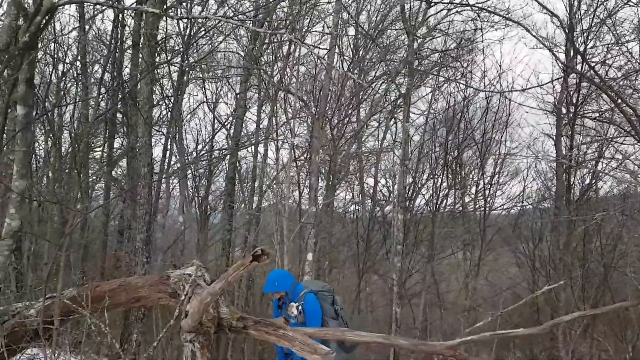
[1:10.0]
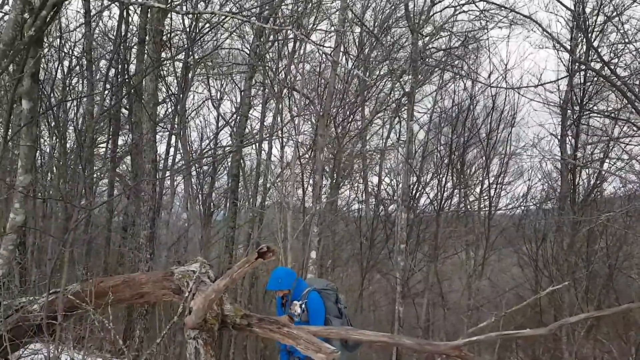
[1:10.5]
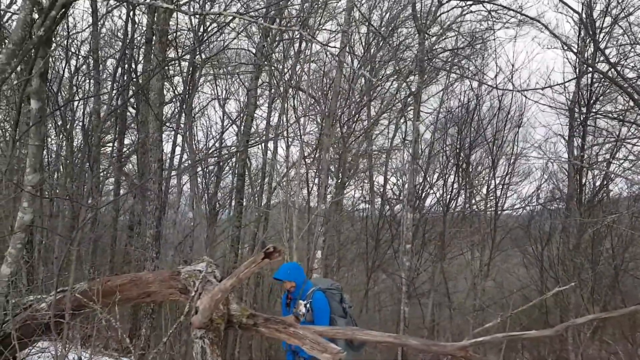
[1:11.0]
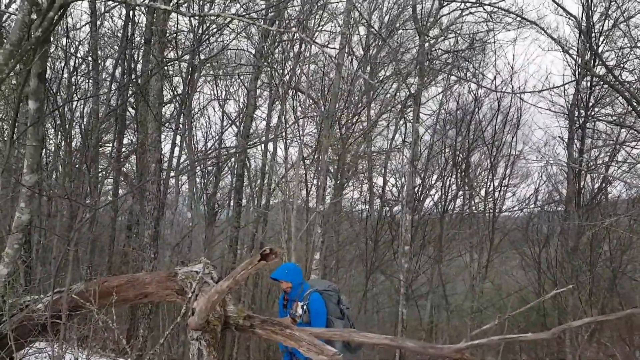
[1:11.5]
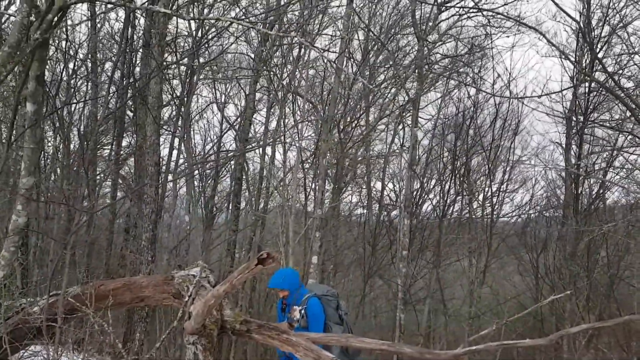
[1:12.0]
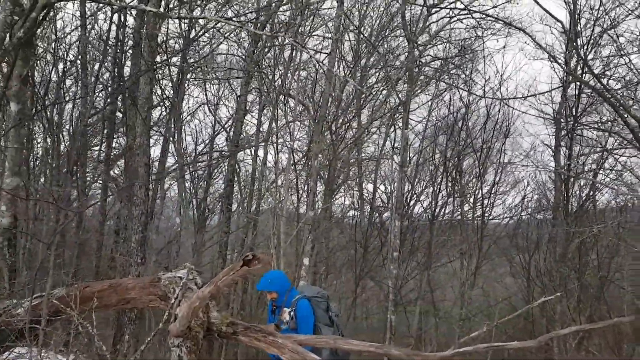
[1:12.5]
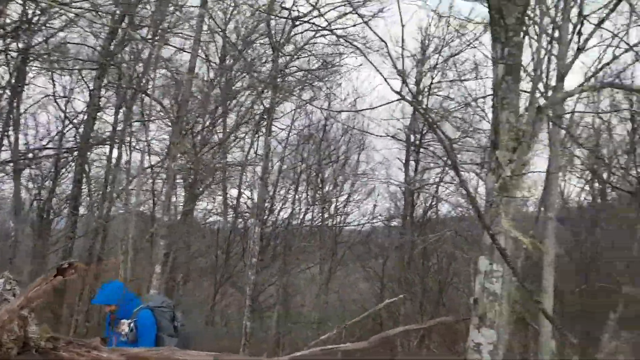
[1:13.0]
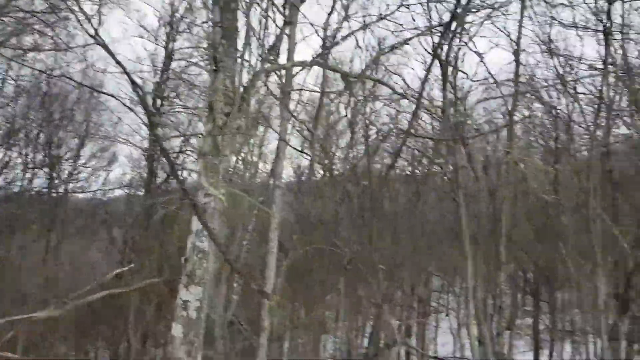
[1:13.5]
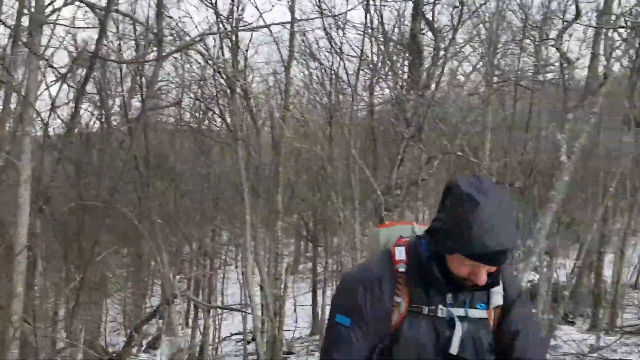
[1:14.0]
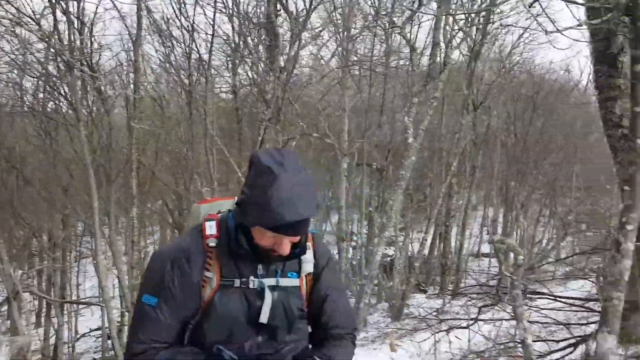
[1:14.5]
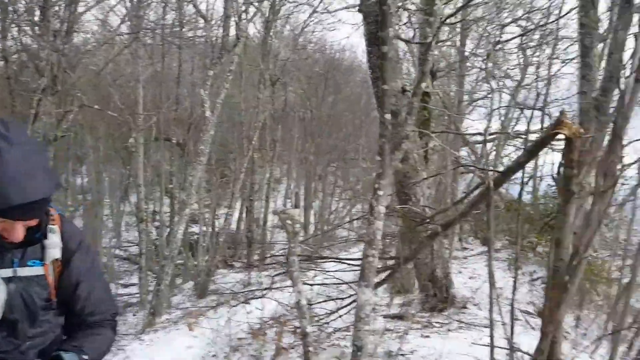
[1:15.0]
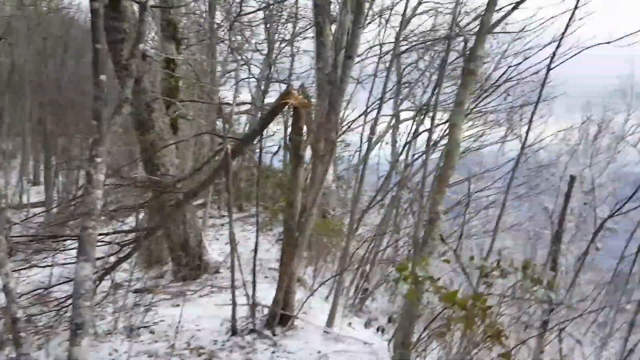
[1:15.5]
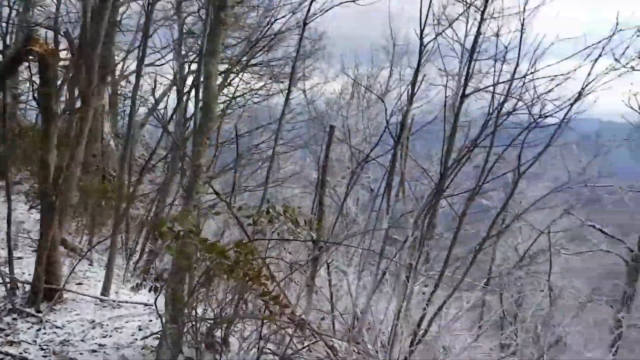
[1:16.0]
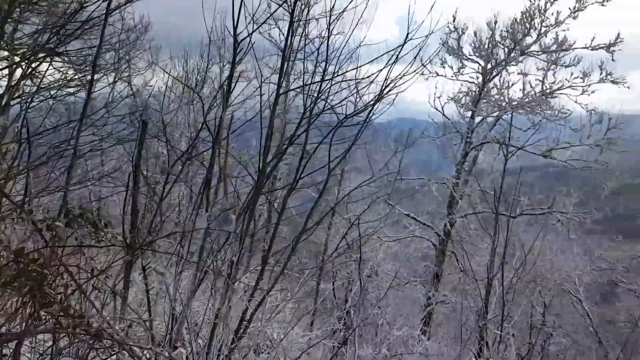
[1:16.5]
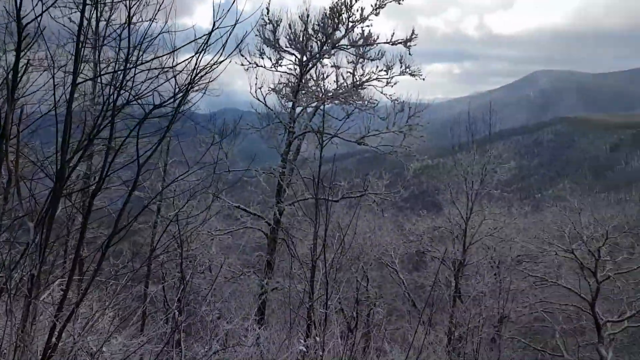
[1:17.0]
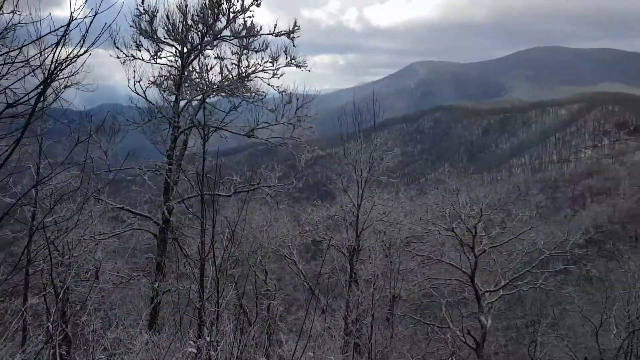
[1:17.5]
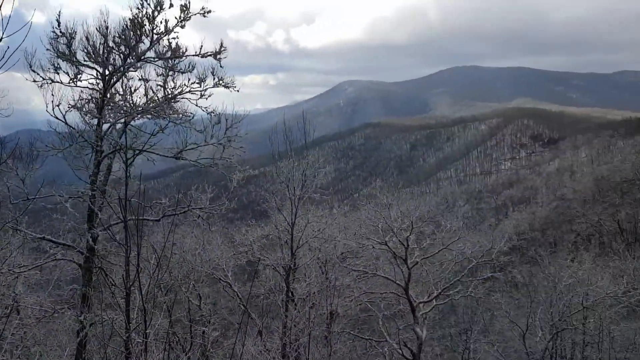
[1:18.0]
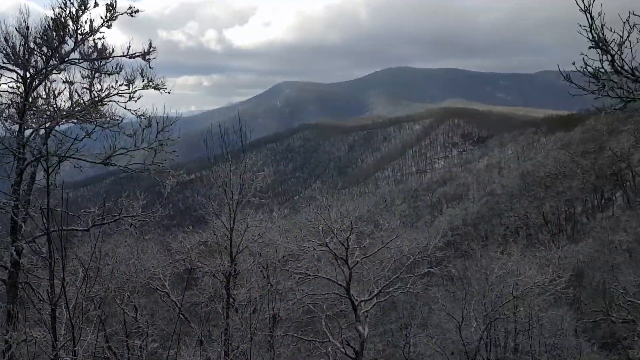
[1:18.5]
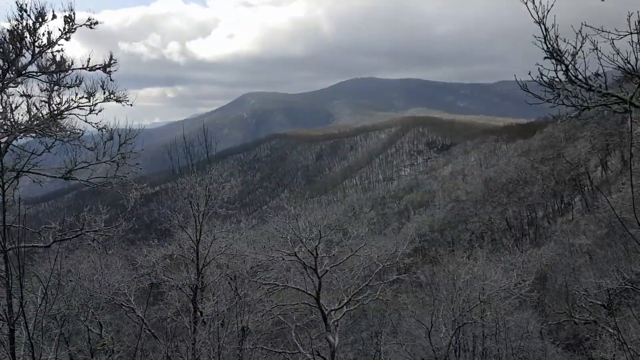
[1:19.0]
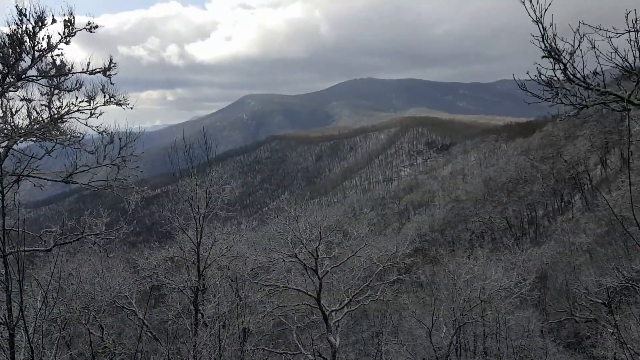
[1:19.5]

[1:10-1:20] At the top of the mountain, everyone is looking down at their devices, apparently trying to determine where they are going, while the camera sort of pans around the mountaintop. The trees surrounding the backpackers and hikers have no leaves or foliage of any kind. The hikers wear warm clothes and layers. They appear to be looking at maps or something similar.